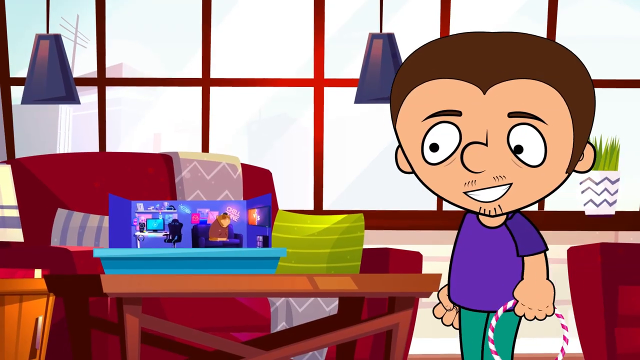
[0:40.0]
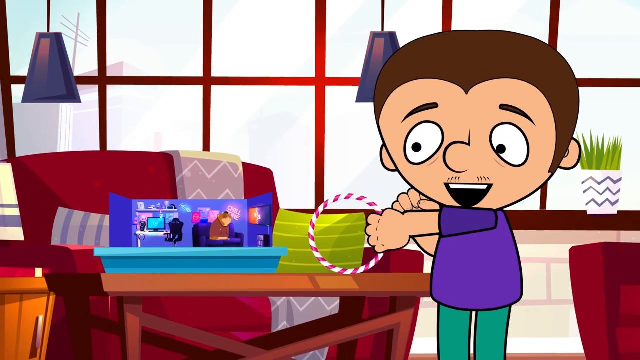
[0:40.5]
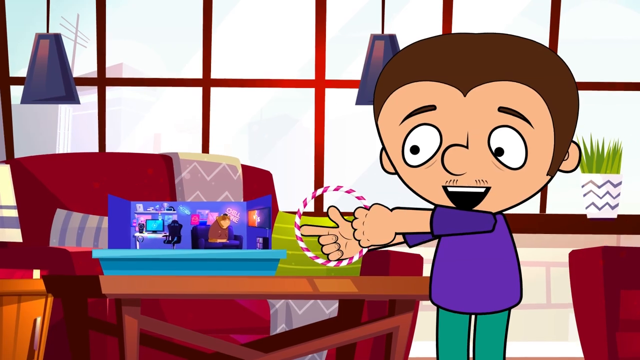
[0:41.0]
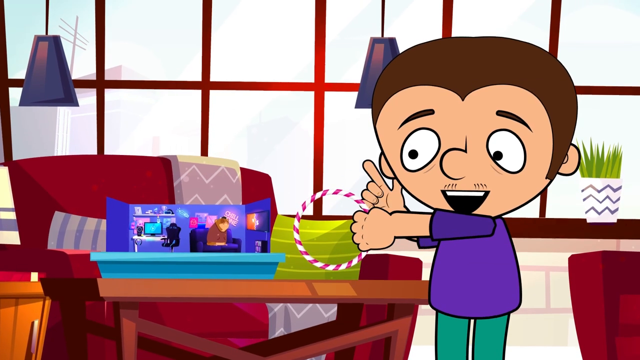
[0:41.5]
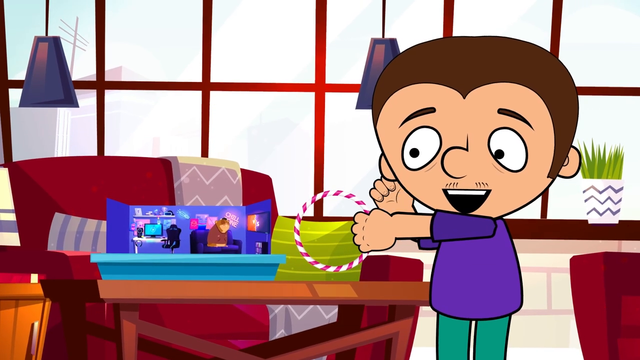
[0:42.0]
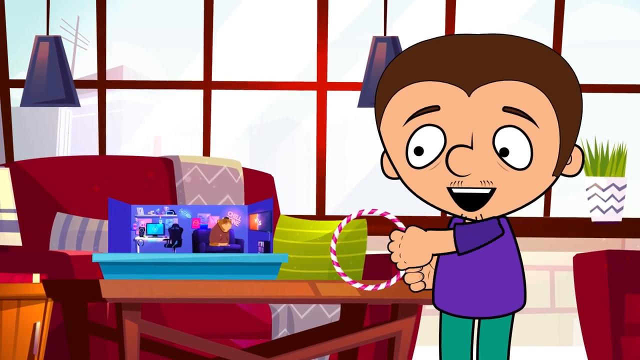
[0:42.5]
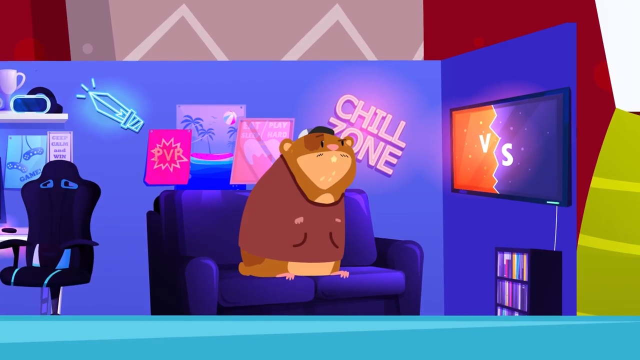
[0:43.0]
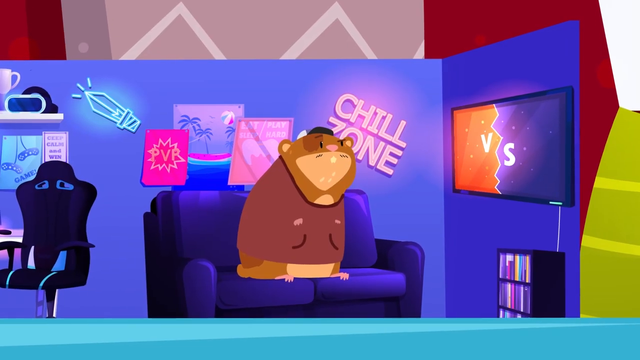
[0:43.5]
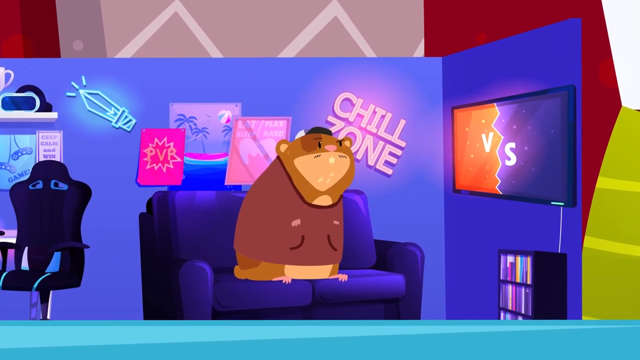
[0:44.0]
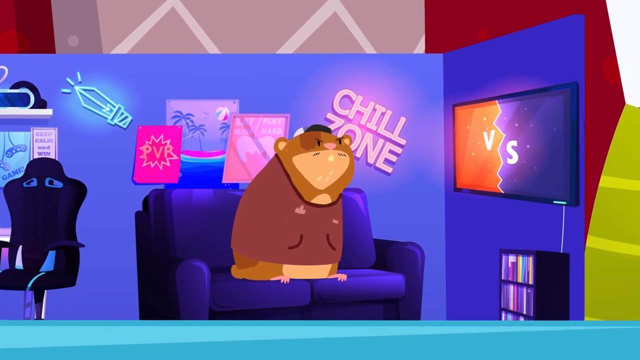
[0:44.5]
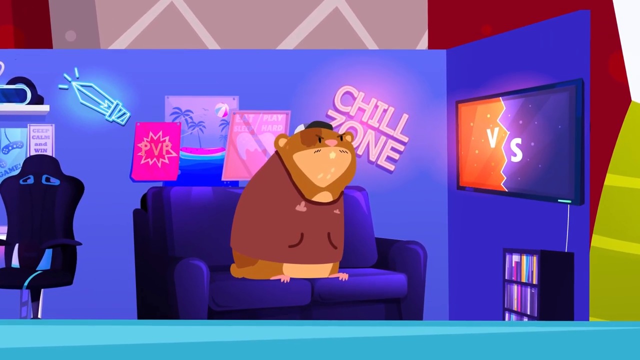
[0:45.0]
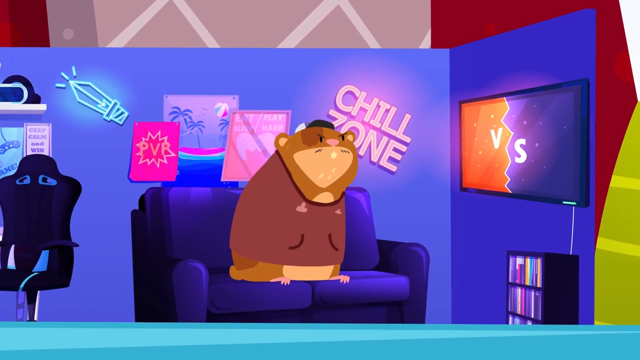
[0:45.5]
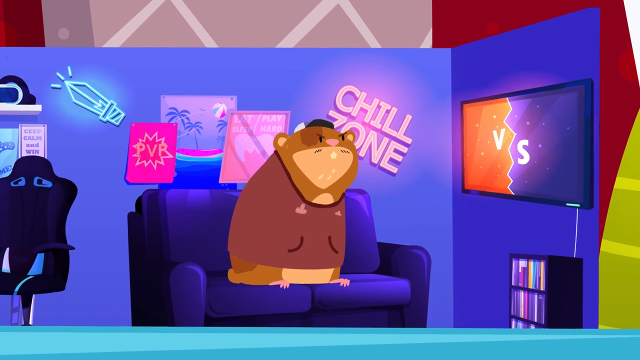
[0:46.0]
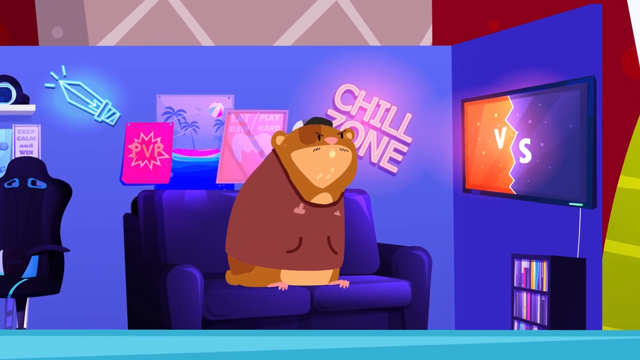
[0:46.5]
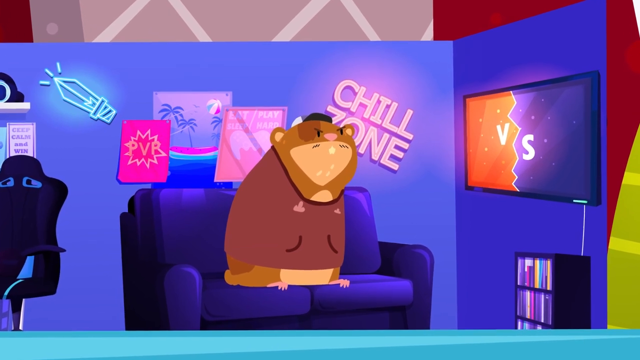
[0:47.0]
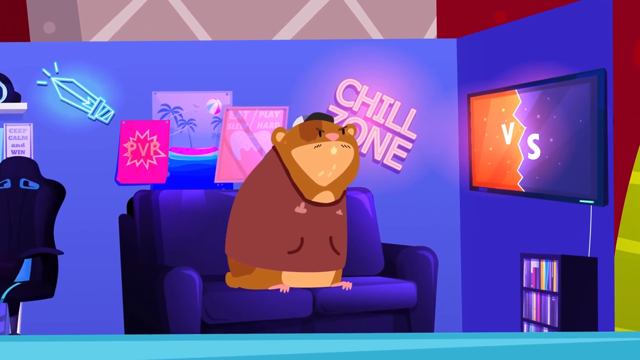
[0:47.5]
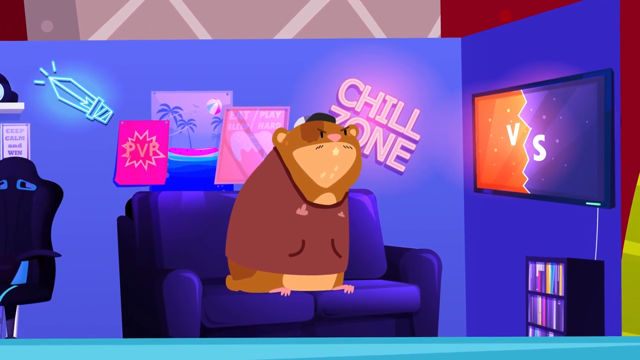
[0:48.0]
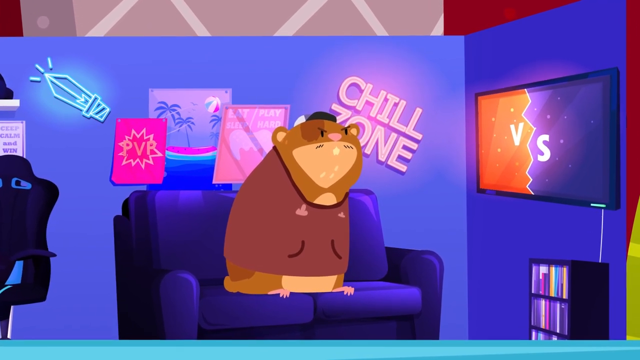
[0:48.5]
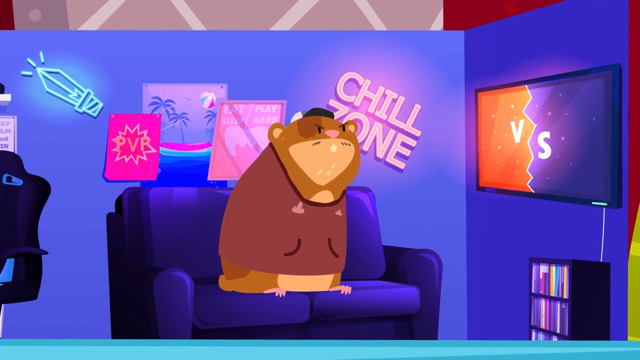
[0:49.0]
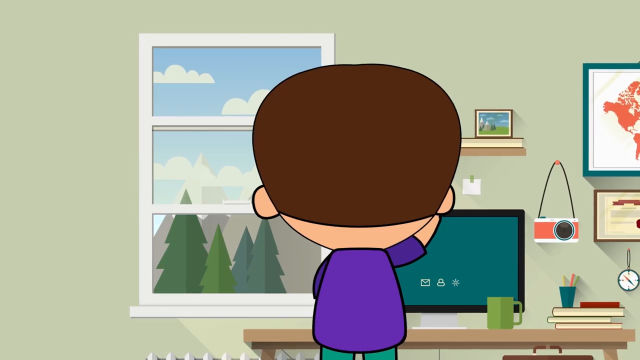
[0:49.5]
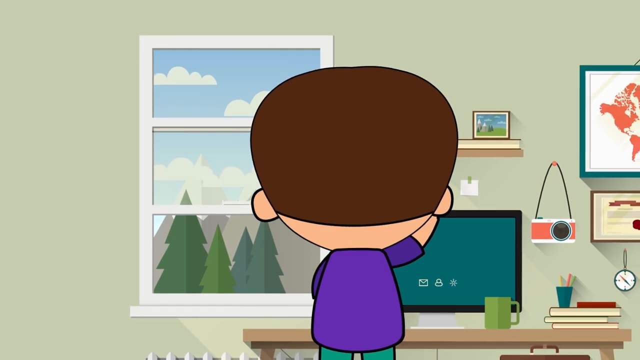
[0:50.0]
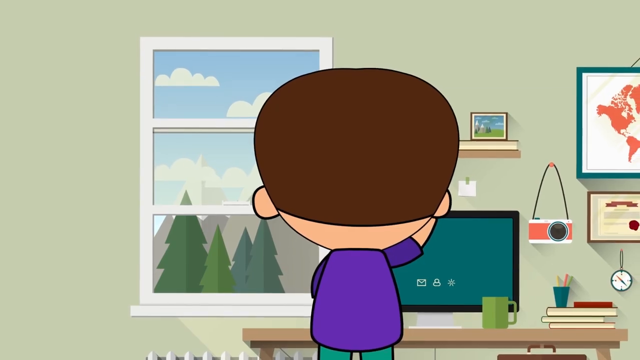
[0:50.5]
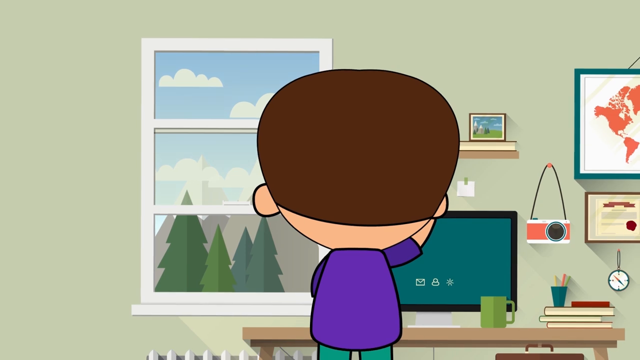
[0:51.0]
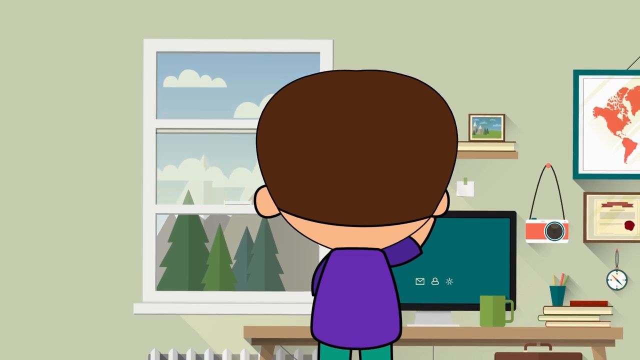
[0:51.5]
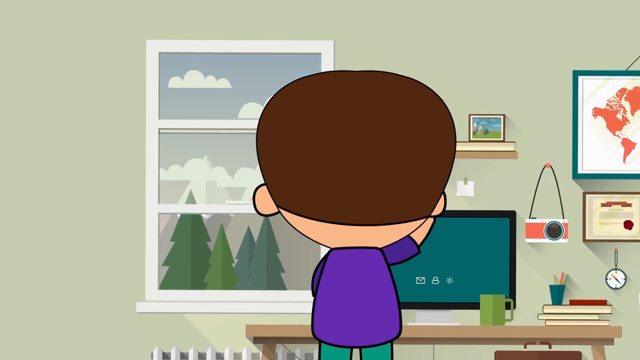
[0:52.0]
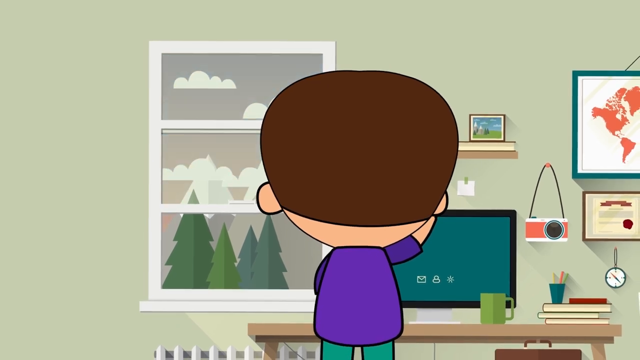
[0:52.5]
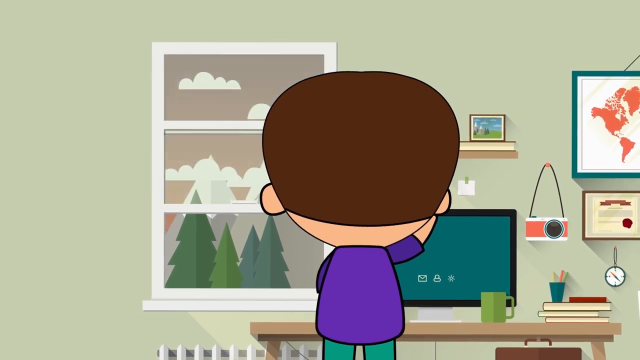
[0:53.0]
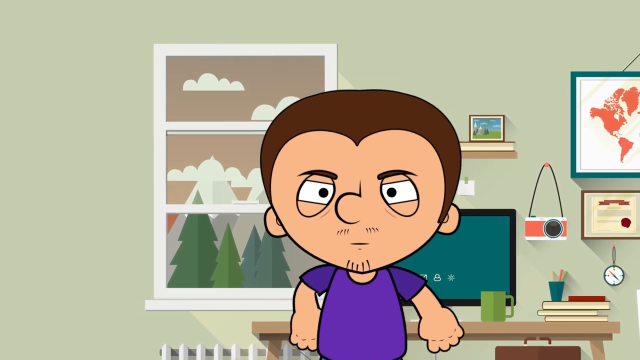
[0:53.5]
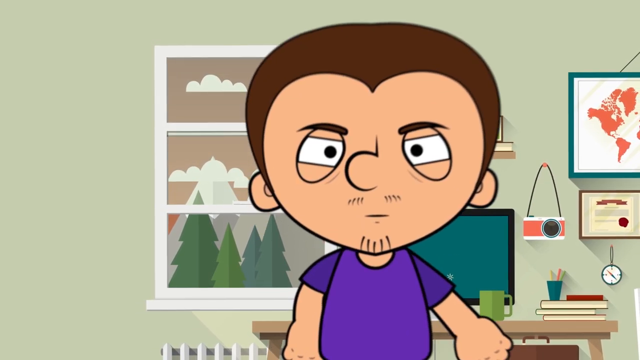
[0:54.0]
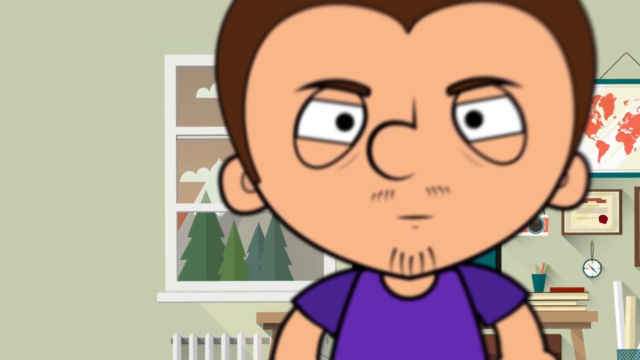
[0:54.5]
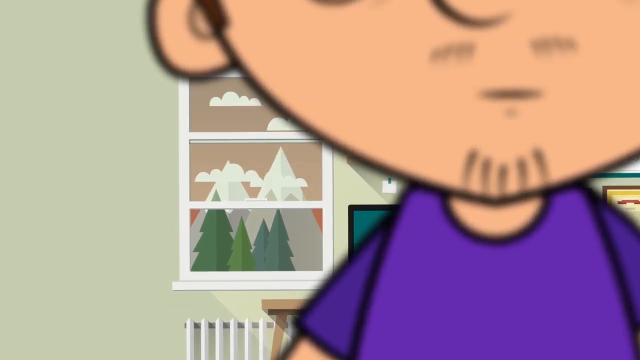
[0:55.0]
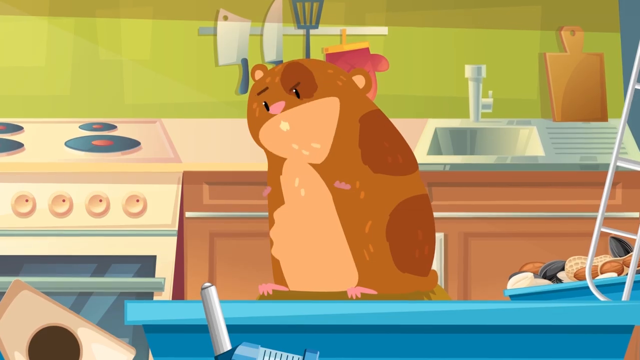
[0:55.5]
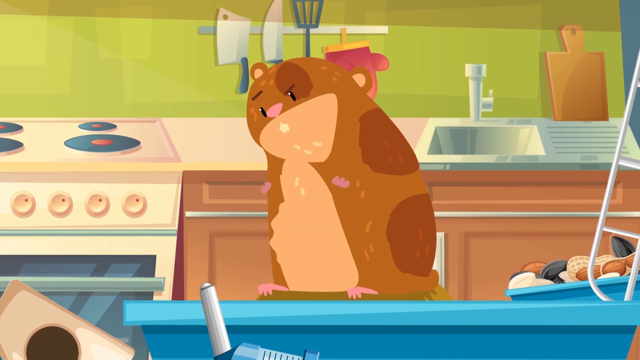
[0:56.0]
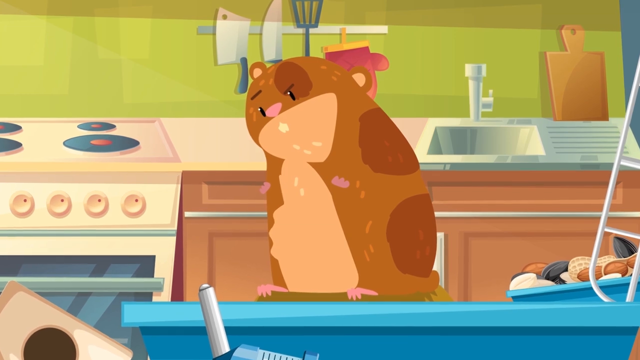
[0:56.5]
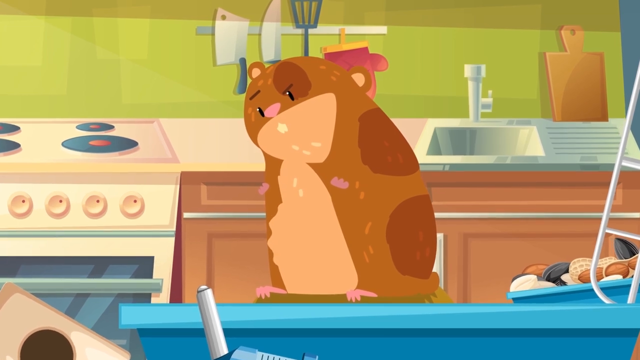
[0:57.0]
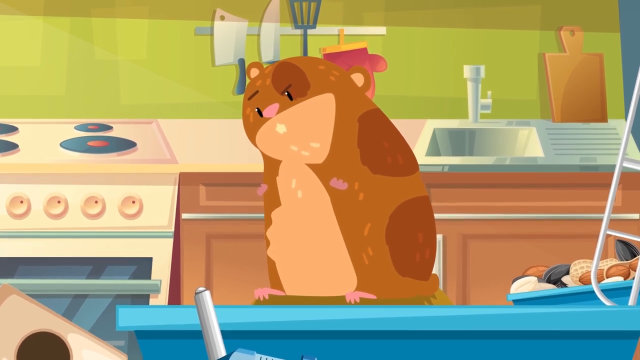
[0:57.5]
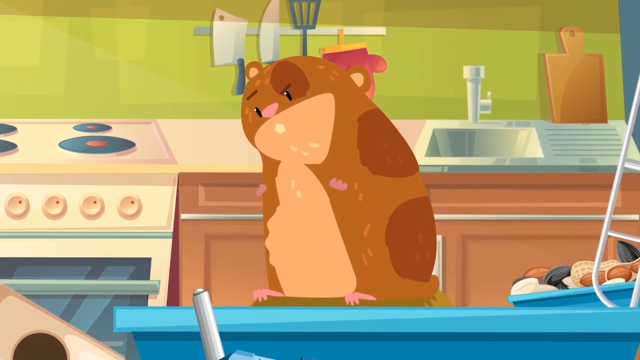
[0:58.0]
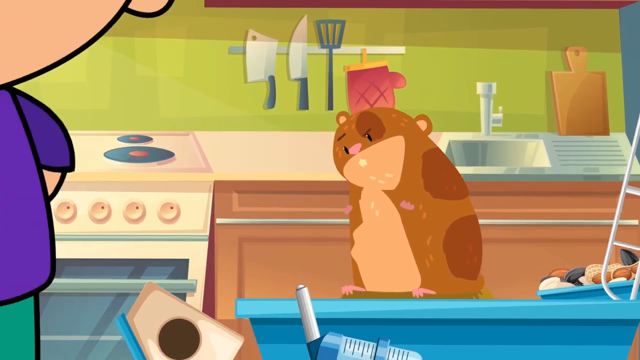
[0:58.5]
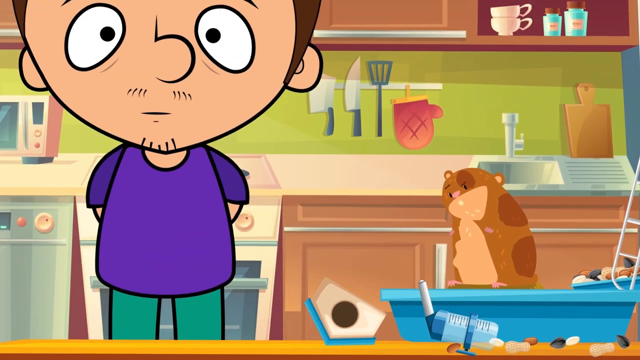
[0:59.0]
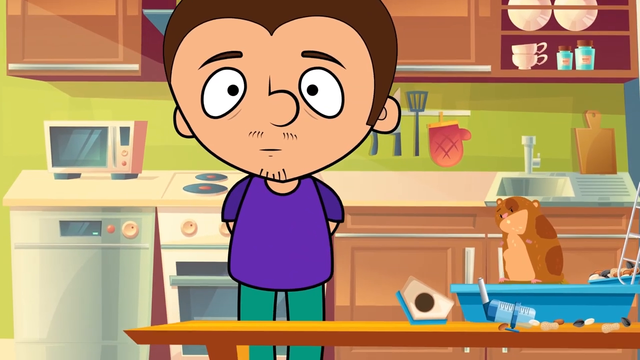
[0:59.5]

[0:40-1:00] Smiling, the male character carries the red and white striped hula hoop and points excitedly with his right index finger at the hole in the hoop a few times. The hamster, wearing a brown shirt and a tiny hat, sits on a blue couch in a miniature living room made for him. He appears angry and holds up his little paws toward the man, his right paw making an indecent gesture. The man is then in his living room with his back to the viewer, adjusting something near his computer screen; when finished, he walks hurriedly toward the kitchen. The hamster sits on the counter looking down at his stomach, which is visibly rumbling. The man is then standing next to the hamster.